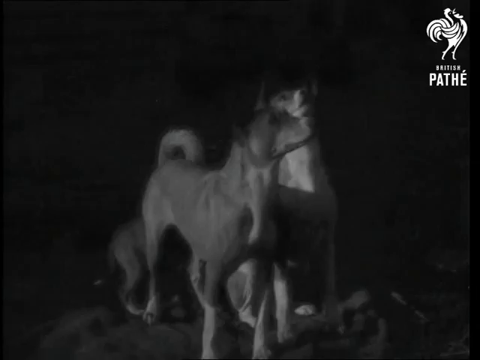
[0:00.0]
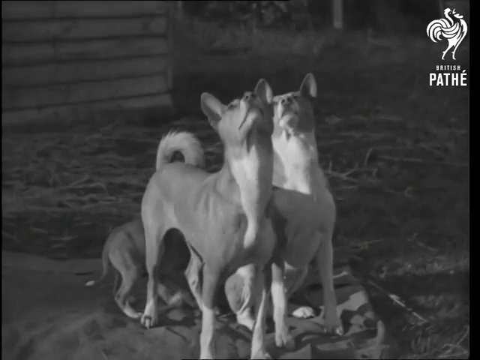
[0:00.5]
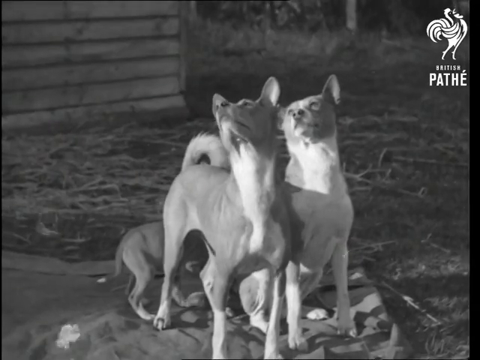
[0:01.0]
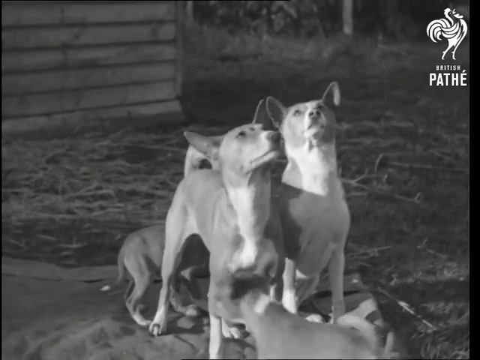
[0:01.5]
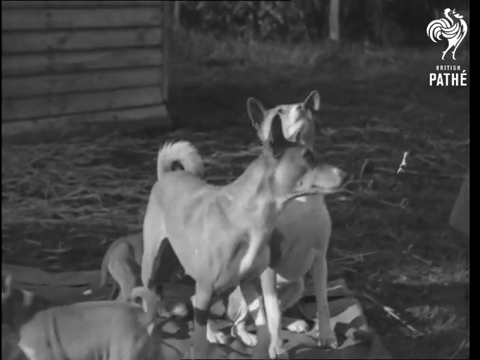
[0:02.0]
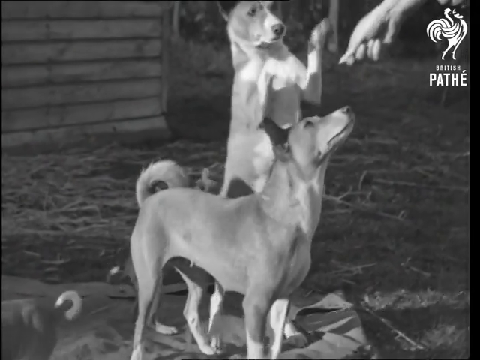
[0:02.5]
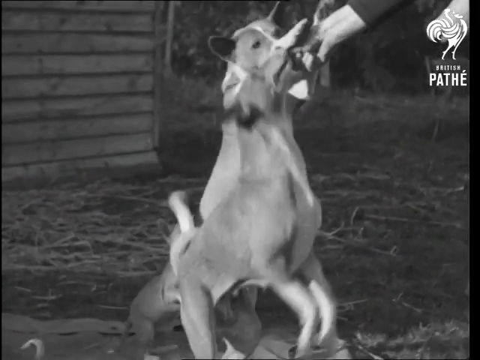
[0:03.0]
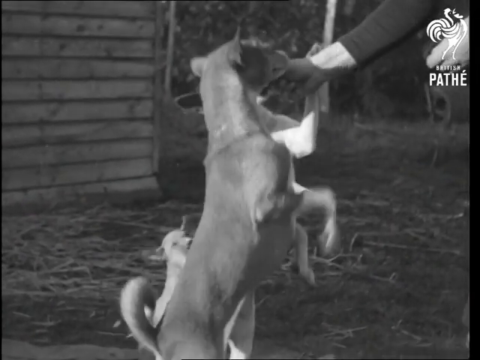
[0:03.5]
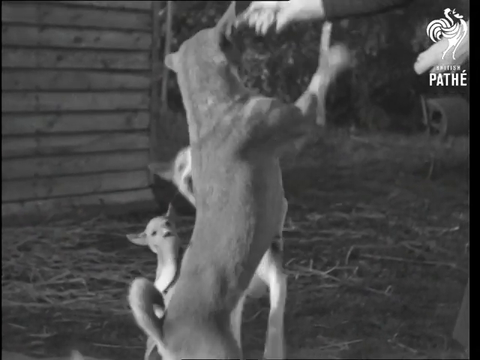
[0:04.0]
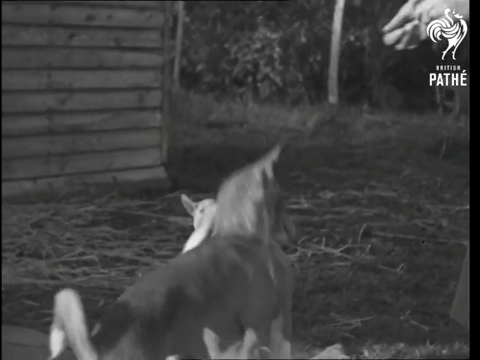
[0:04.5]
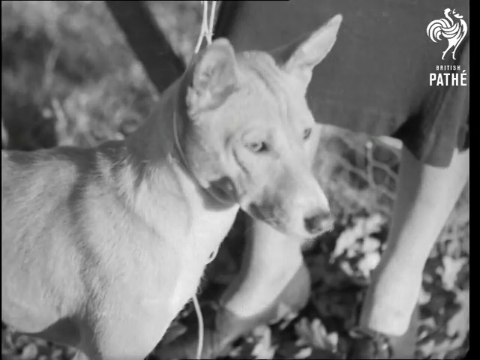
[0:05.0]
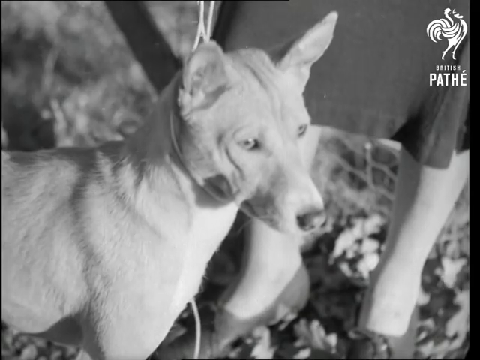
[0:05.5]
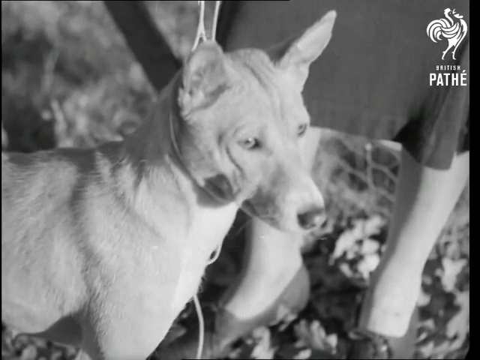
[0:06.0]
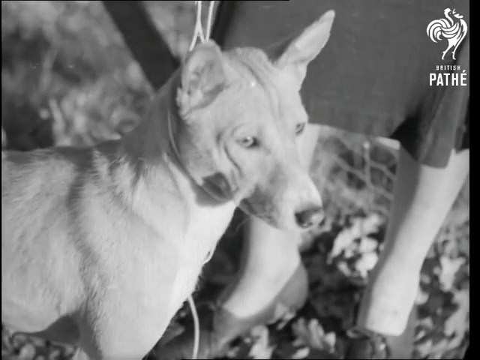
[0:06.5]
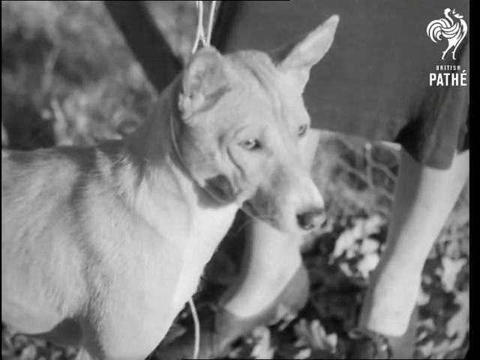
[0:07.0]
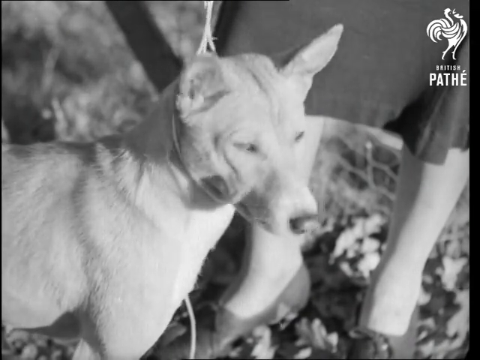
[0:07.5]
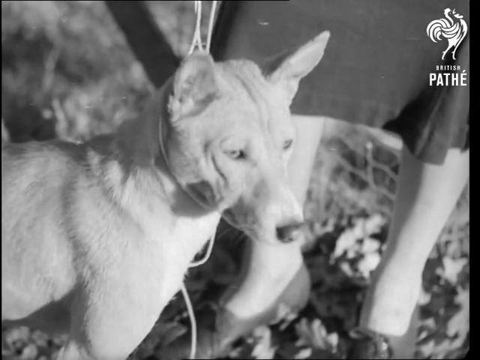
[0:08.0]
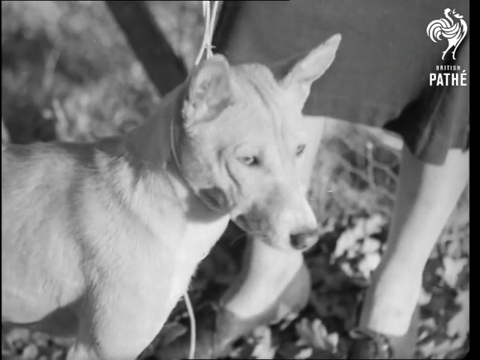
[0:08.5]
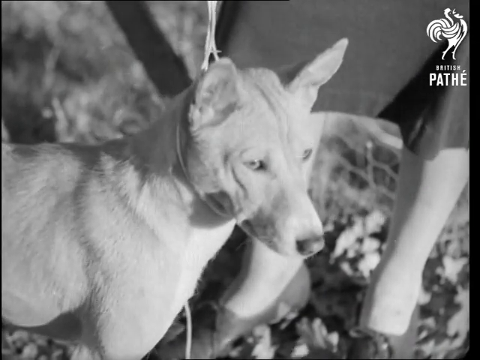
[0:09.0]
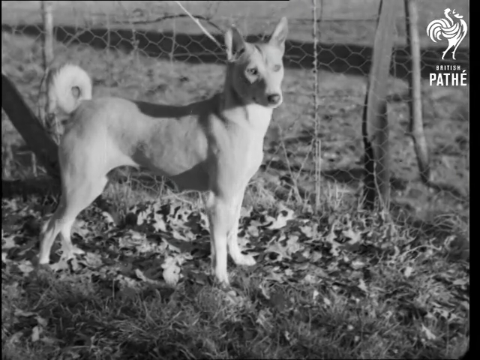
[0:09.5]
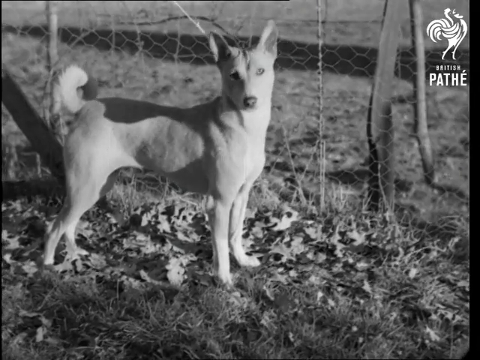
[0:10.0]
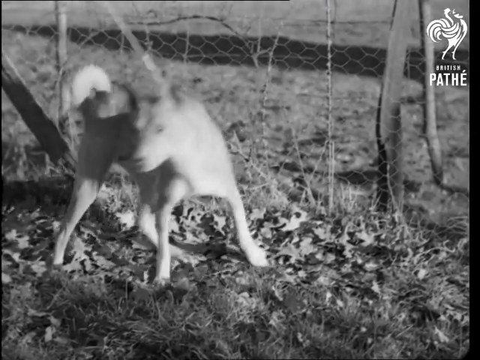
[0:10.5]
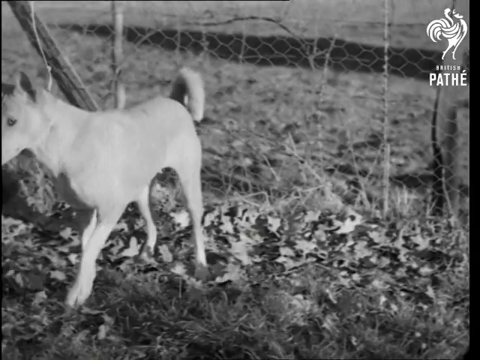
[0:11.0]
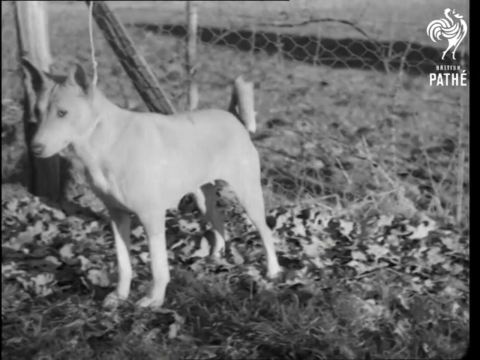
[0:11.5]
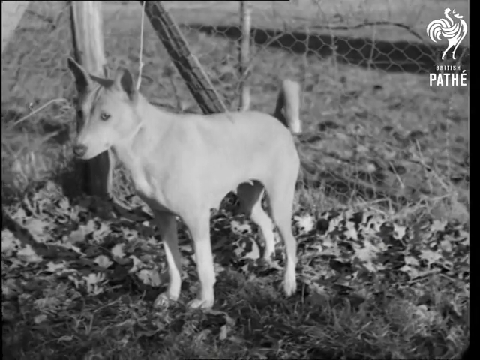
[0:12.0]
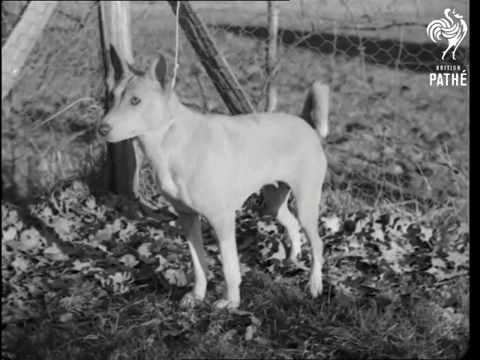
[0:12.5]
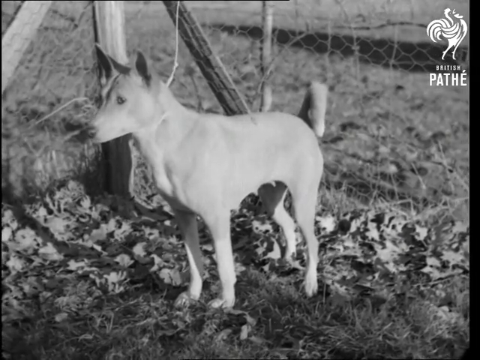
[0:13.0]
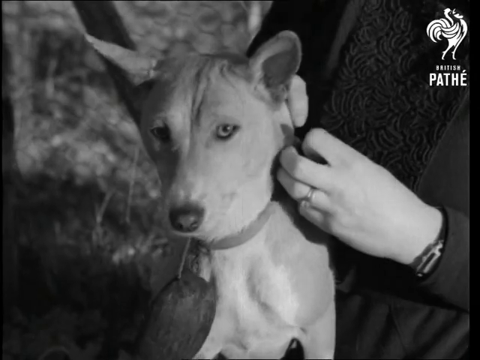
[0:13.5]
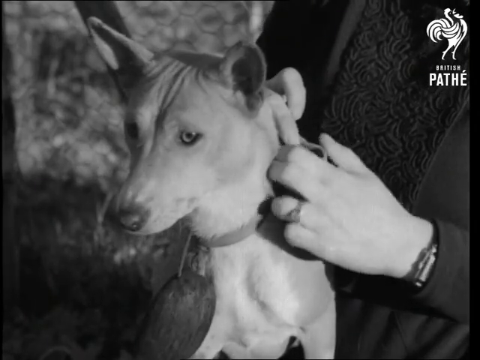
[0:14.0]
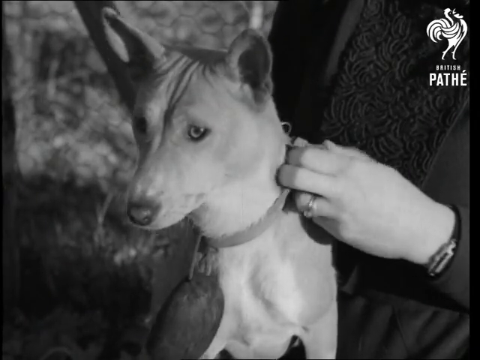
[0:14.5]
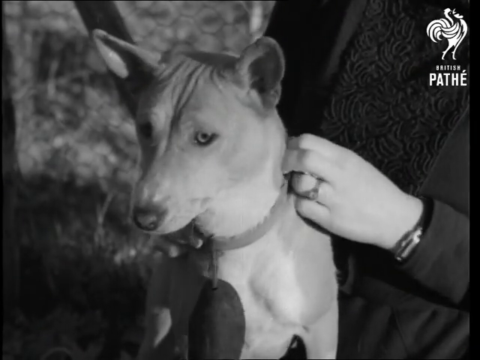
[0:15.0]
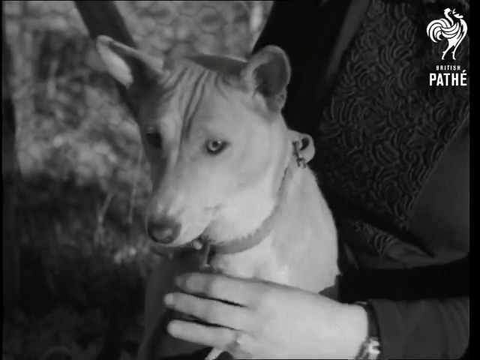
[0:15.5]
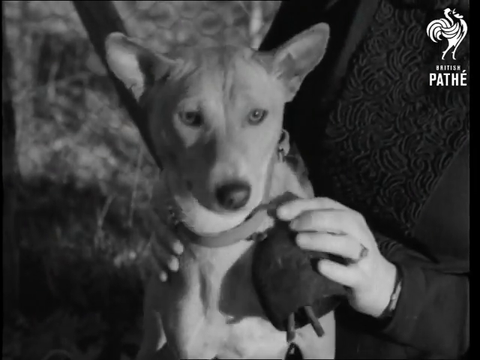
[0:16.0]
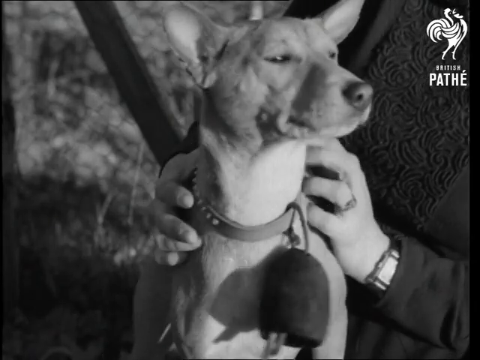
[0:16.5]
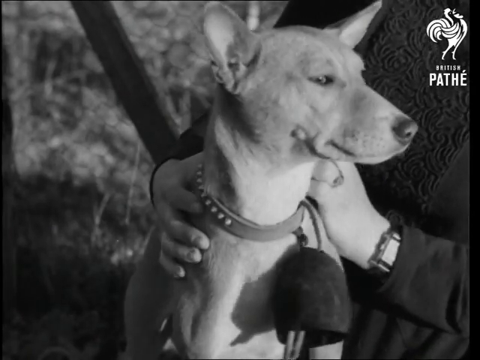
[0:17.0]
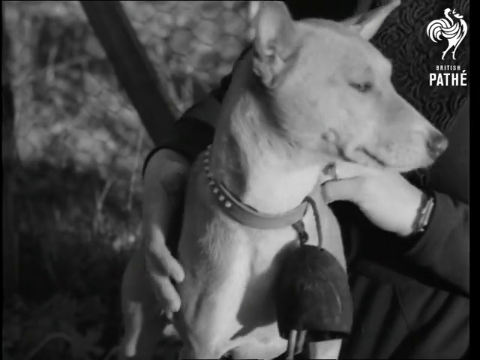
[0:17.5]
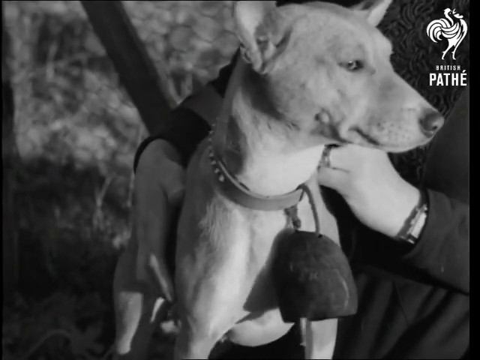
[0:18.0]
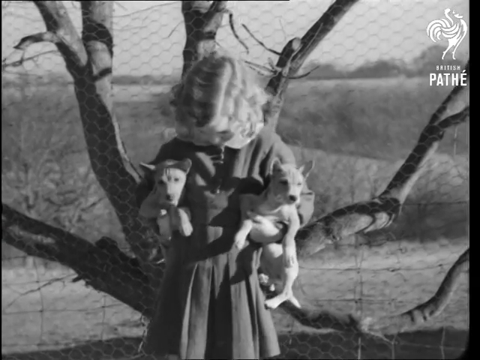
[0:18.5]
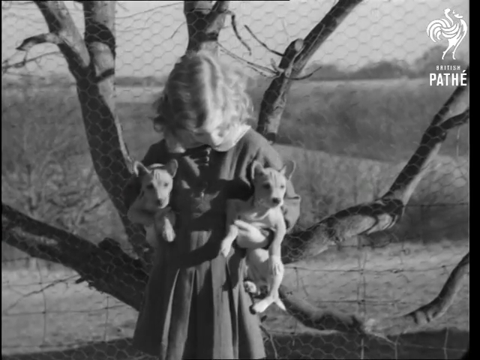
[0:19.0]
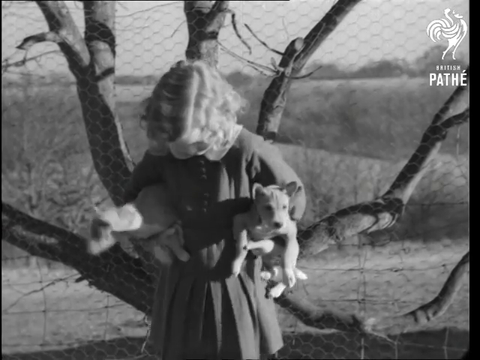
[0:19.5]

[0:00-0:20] A black and white picture shows what looks like two large dogs and two little dogs. They seem to be kind of standing up on two legs while a person puts their hand down, apparently holding food. The video cuts to a close-up of a dog on a leash with a person standing next to him; only the person's legs are visible, and the person seems to be wearing a dress. The dog is kind of looking toward the right, then quickly looks at the camera. Another shot shows the same dog, now attached to a fence that looks like a chicken wire fence. He first looks toward the left, then turns and looks toward the right of the screen. A person puts a collar on the dog, which almost seems to have a cowbell on it. The video then cuts to a little girl holding two puppies.